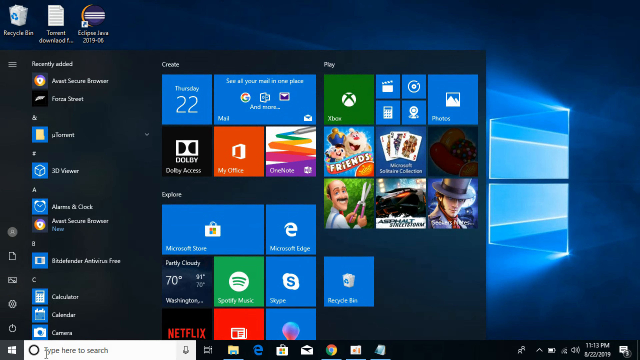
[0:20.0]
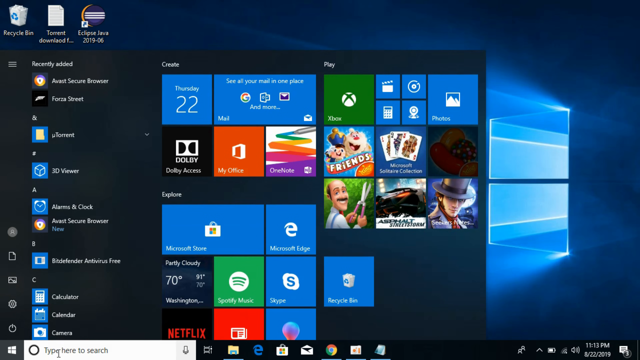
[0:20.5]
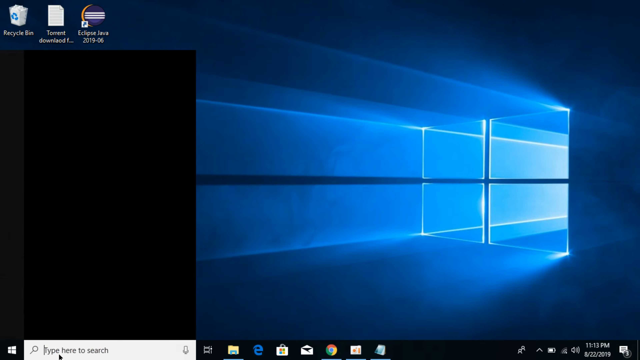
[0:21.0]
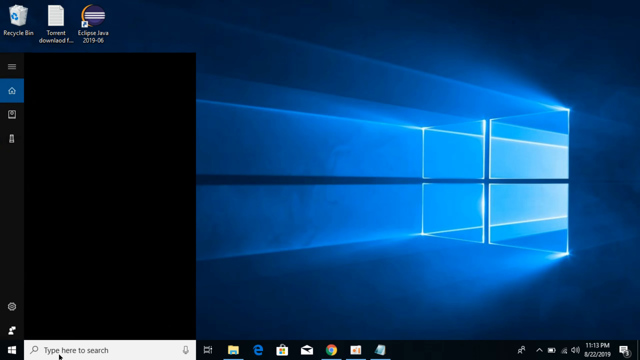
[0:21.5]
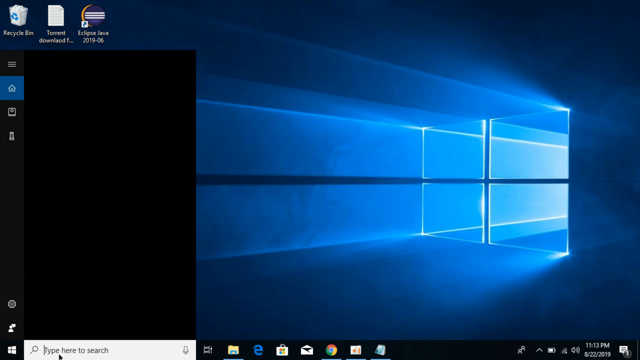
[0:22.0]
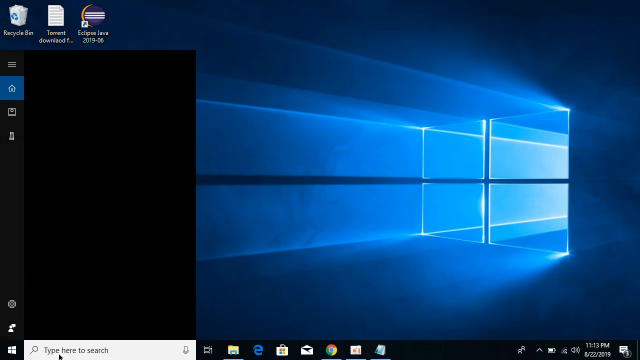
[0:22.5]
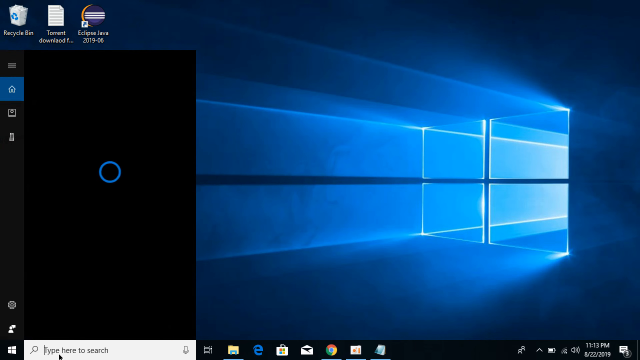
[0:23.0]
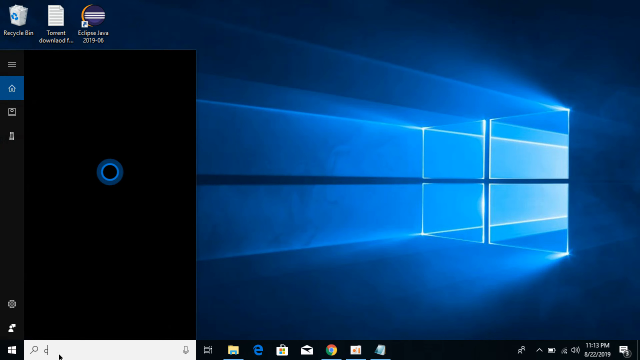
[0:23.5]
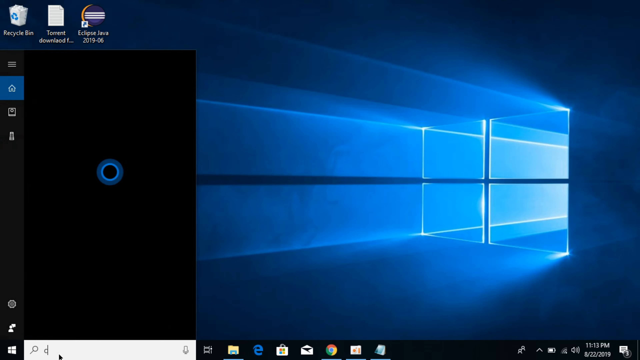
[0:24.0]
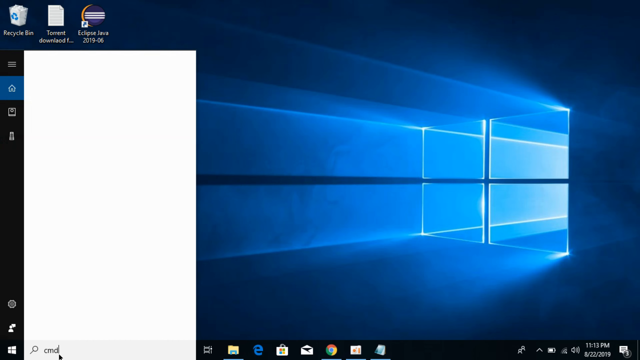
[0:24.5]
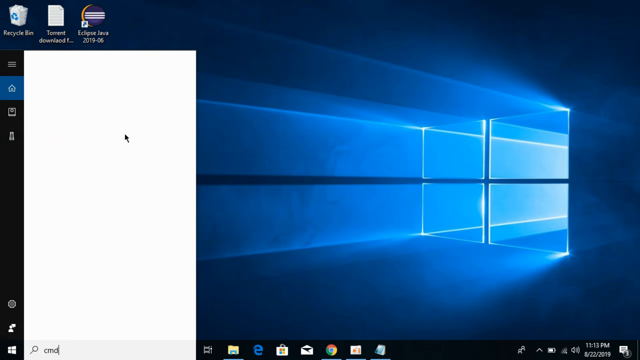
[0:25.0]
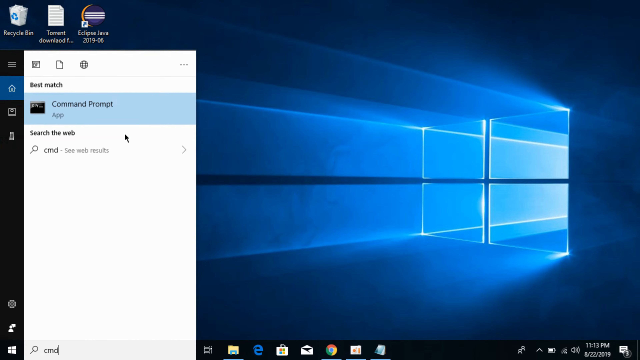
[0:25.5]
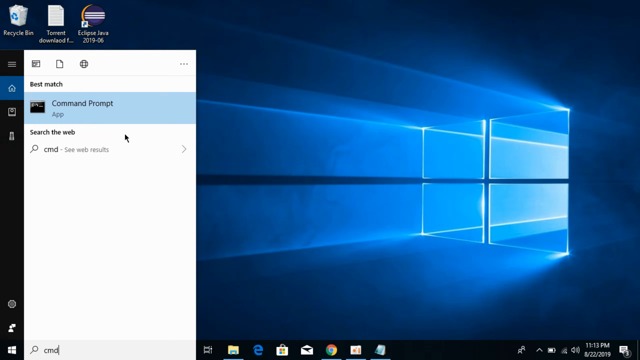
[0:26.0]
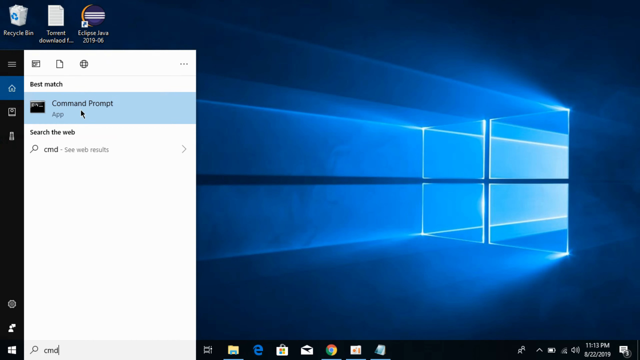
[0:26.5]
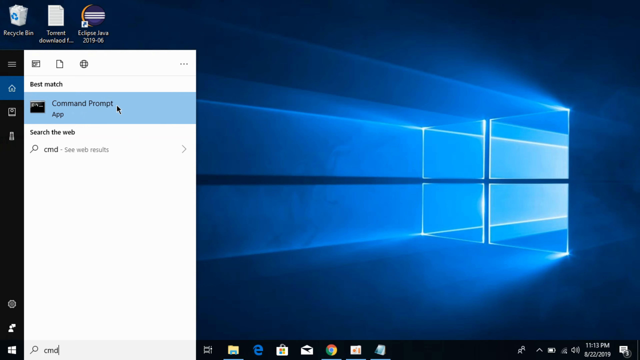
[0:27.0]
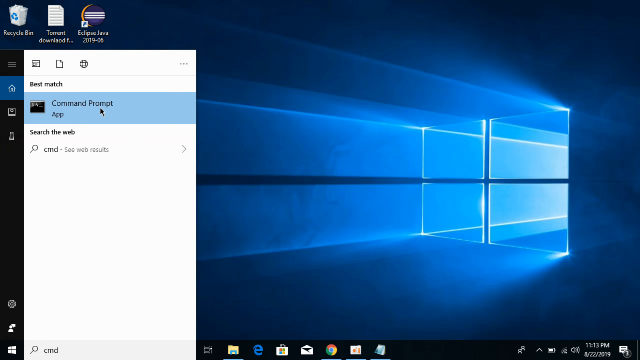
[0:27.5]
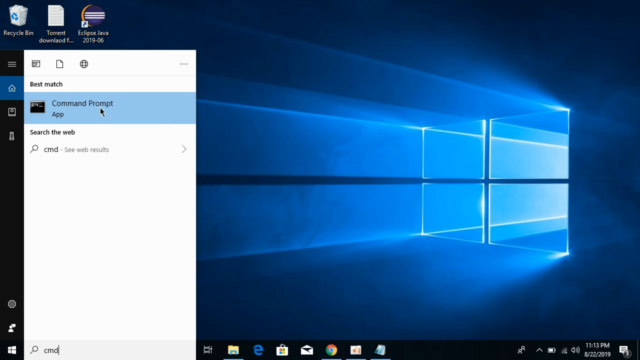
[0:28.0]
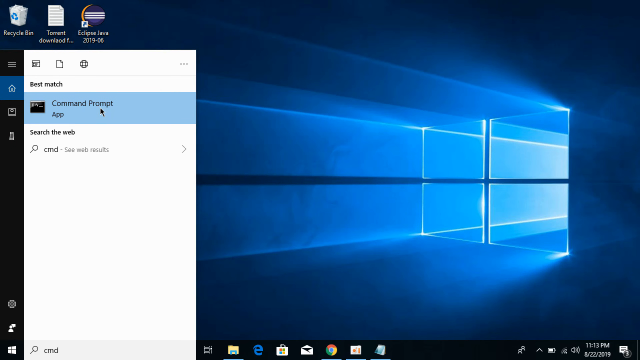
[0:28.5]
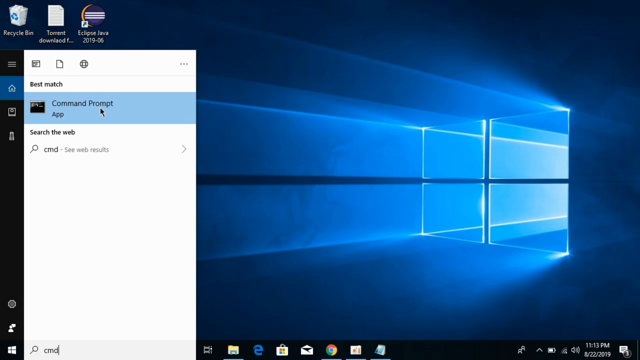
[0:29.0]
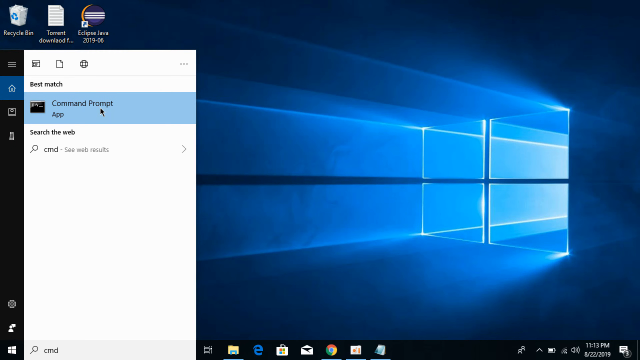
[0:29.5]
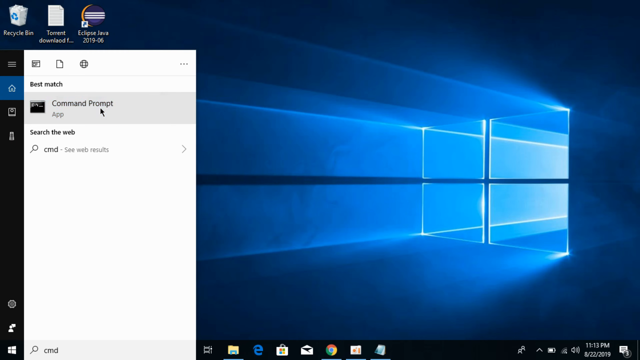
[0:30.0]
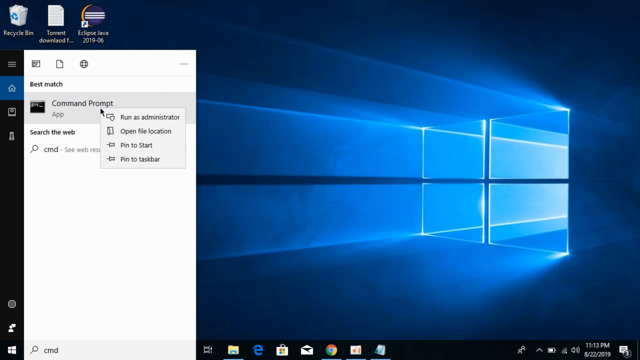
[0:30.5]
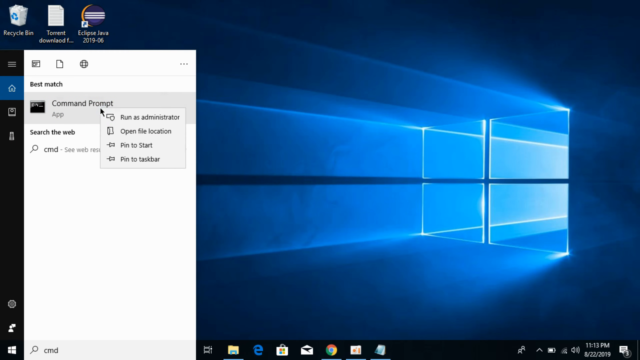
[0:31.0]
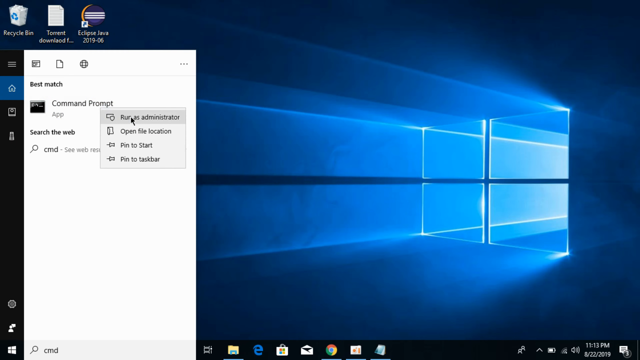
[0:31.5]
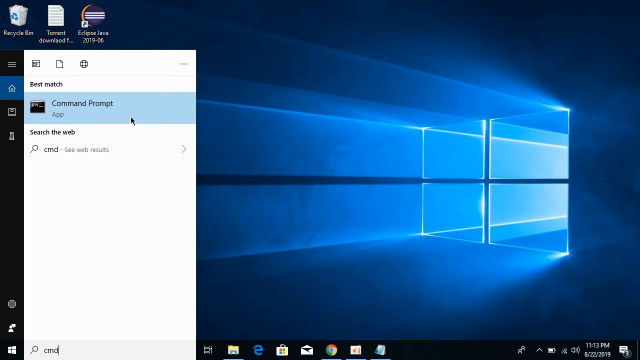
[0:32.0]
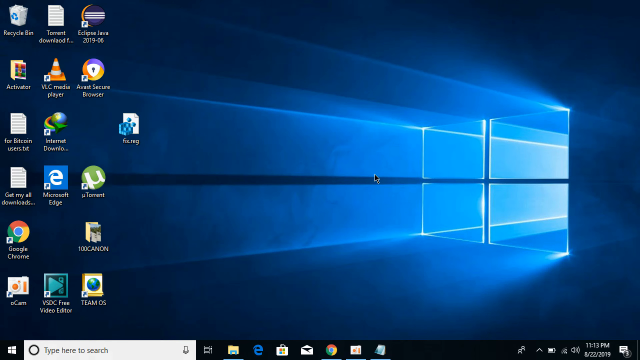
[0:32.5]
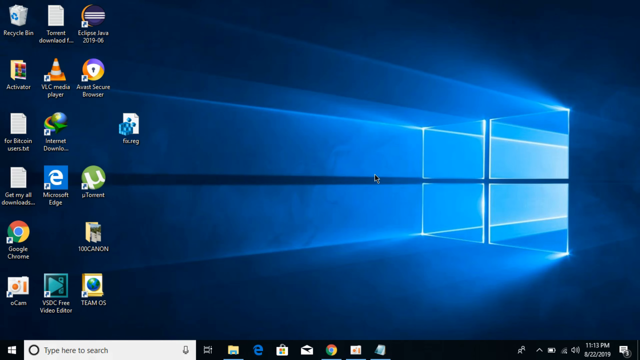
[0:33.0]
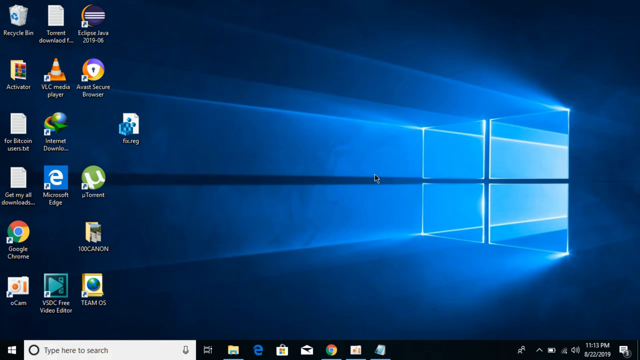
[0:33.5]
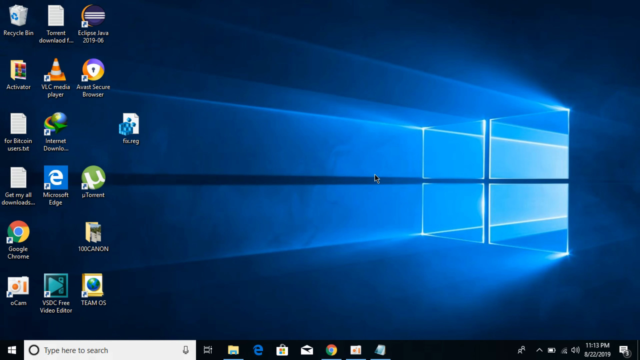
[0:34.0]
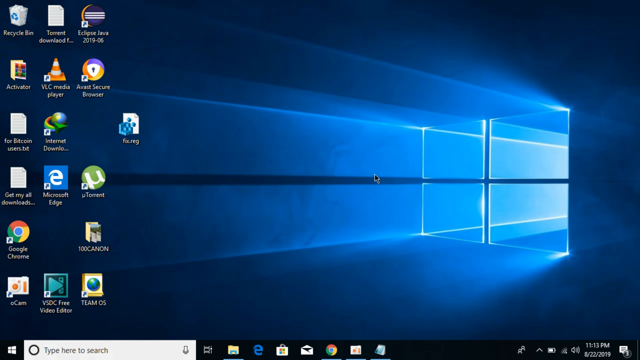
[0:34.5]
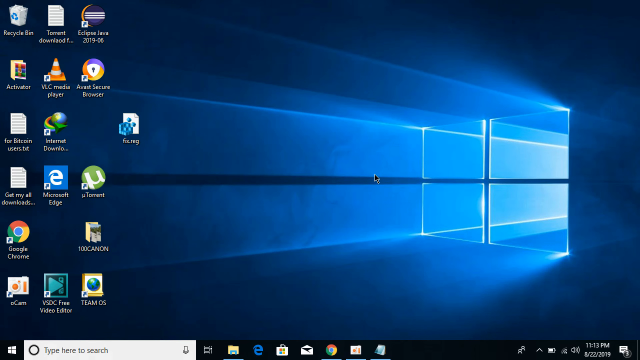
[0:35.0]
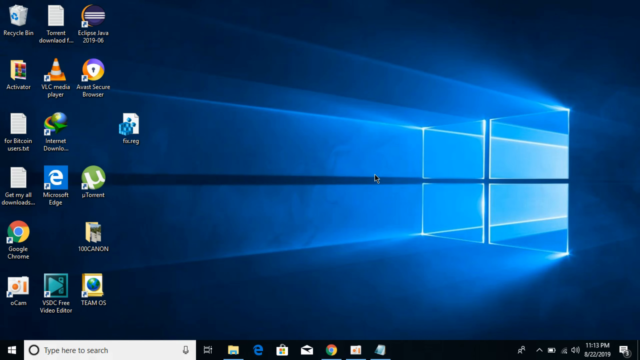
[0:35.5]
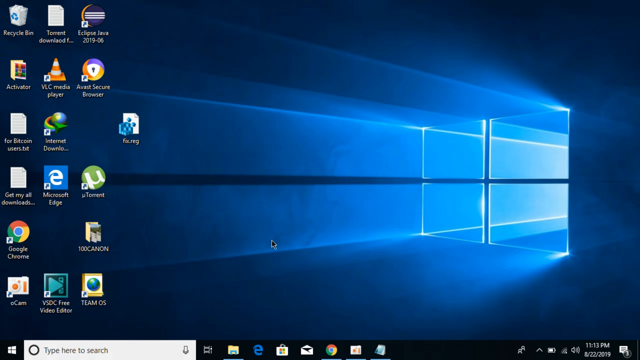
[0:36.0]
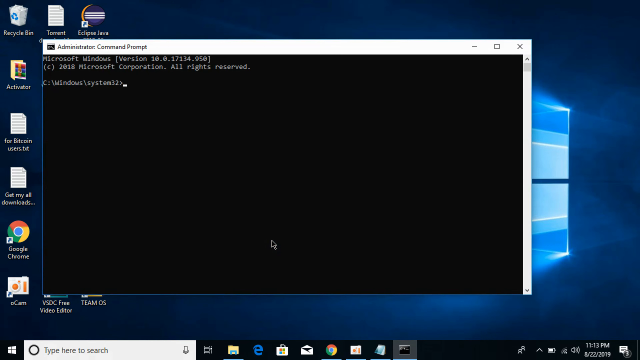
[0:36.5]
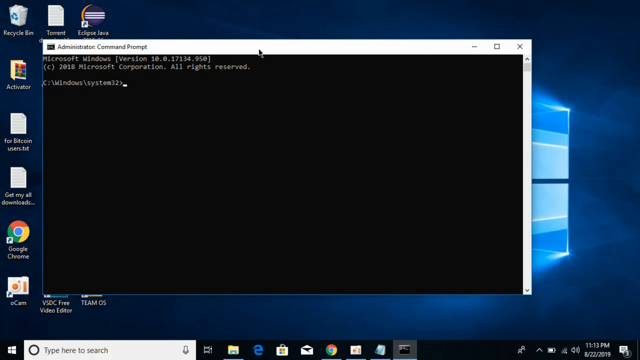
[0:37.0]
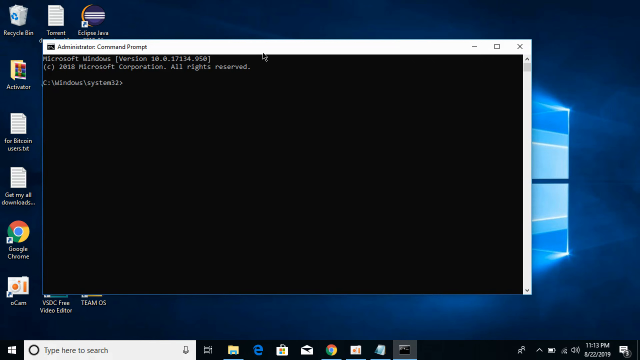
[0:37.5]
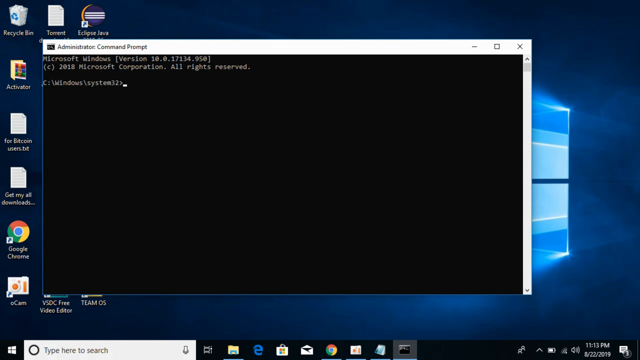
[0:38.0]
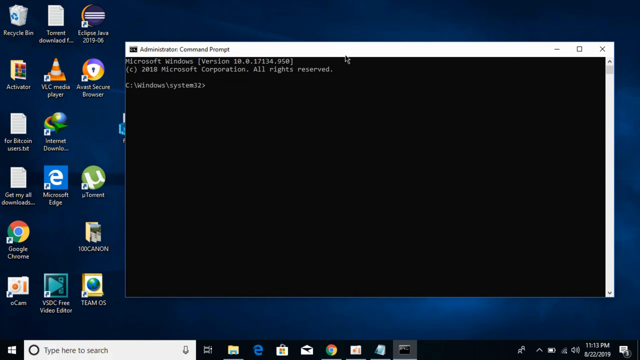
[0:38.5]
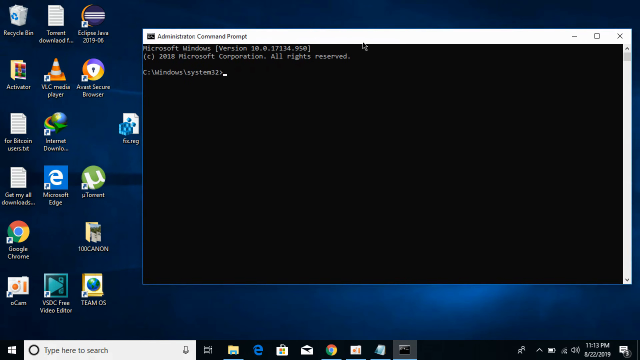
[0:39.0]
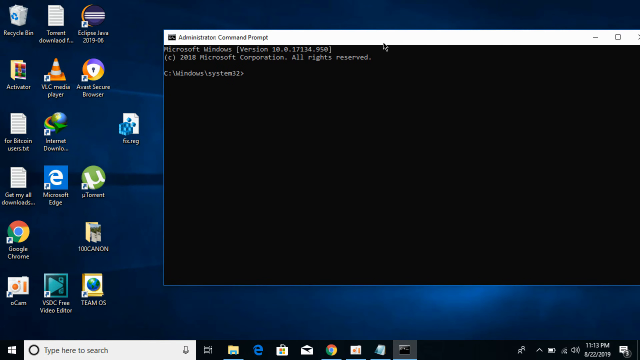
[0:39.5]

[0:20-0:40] The mouse clicks the Start menu again and it closes. The user then clicks on the search bar, where the default text reads "type here to search," and types "CMD." The best match shown is Command Prompt, an app, and the mouse hovers over it; below it is a search-the-web option. The user seems to right-click on Command Prompt, bringing up a menu, and clicks the first option, "run as administrator." The Command Prompt window appears, and the user drags it toward the right side of the screen, where it goes slightly off the edge. The terminal is visible with its cursor blinking.